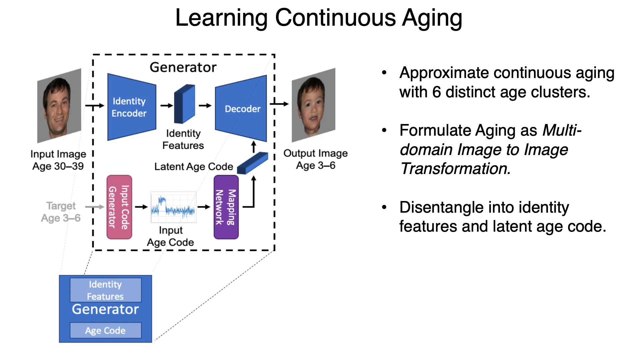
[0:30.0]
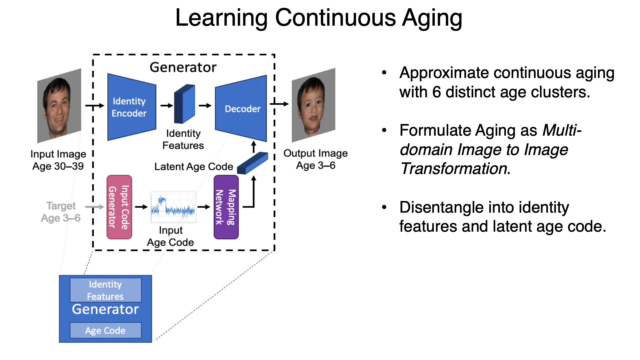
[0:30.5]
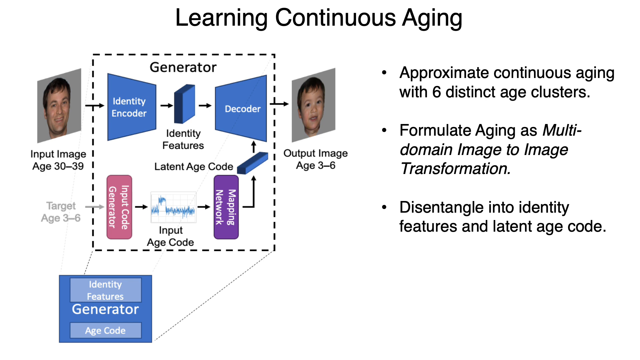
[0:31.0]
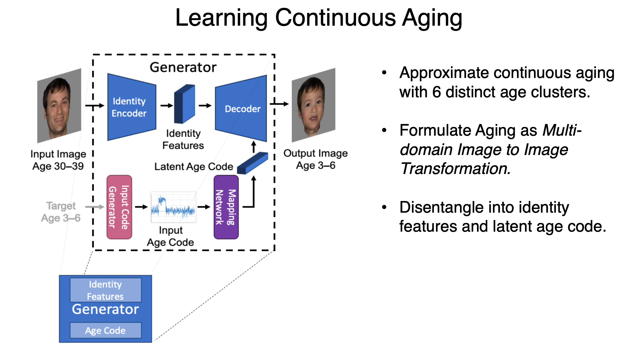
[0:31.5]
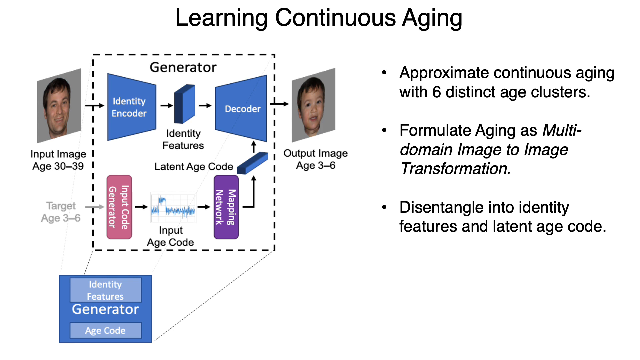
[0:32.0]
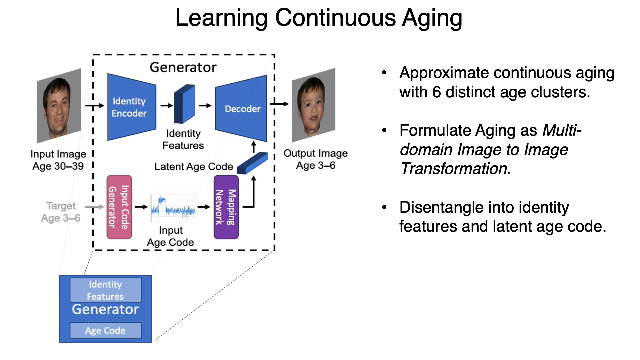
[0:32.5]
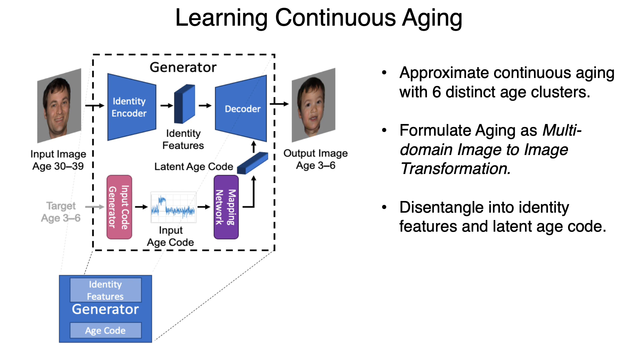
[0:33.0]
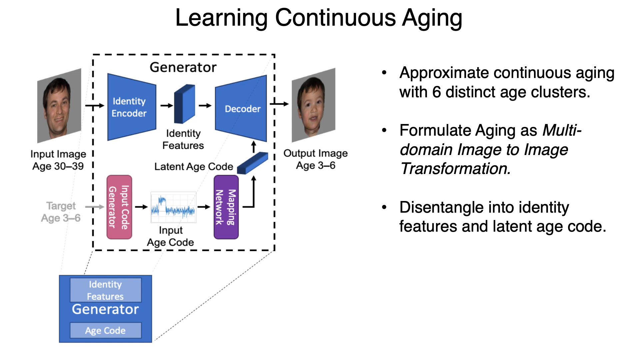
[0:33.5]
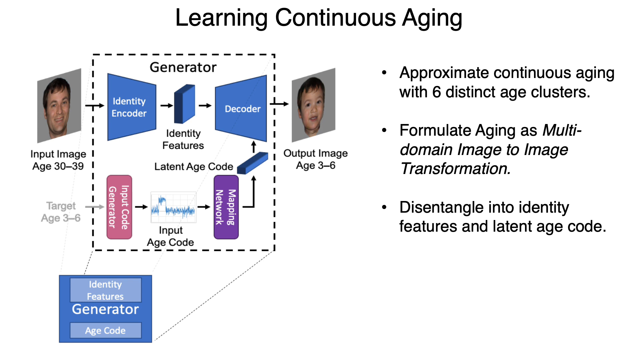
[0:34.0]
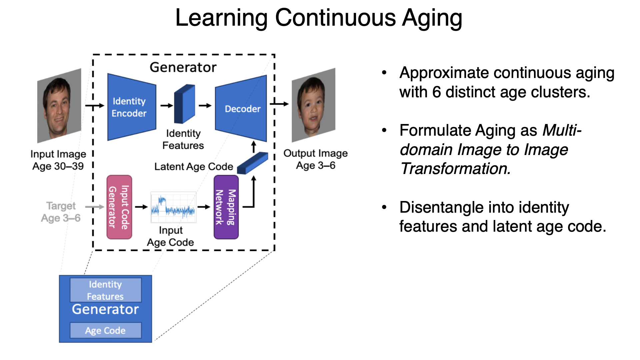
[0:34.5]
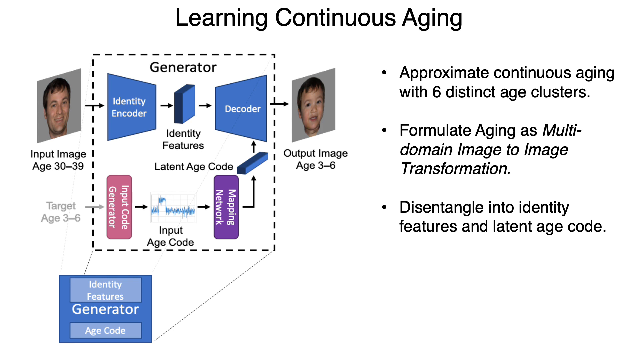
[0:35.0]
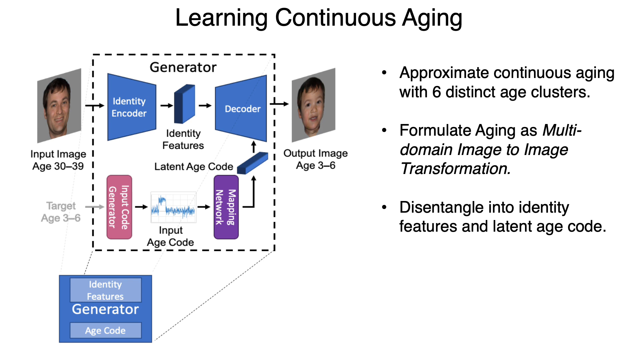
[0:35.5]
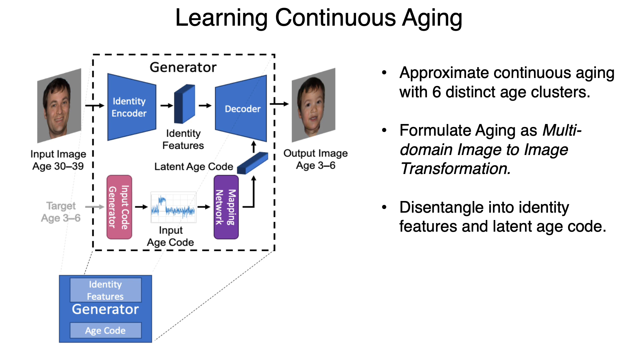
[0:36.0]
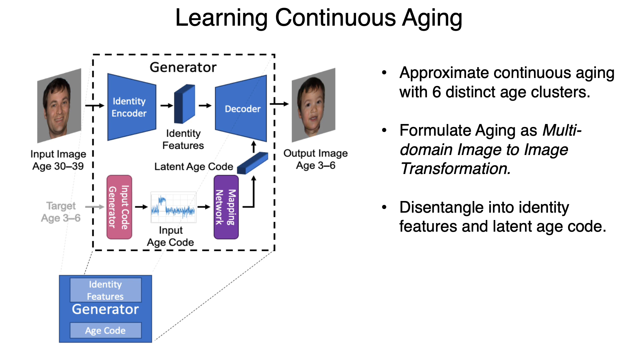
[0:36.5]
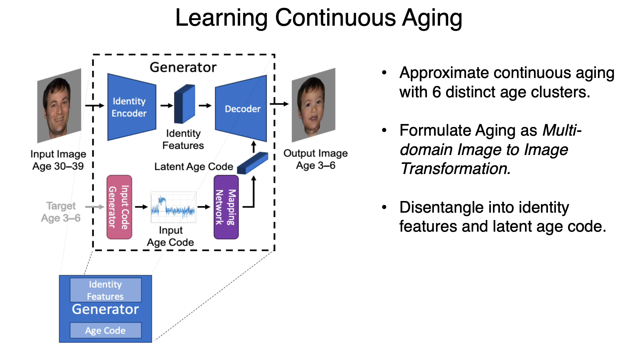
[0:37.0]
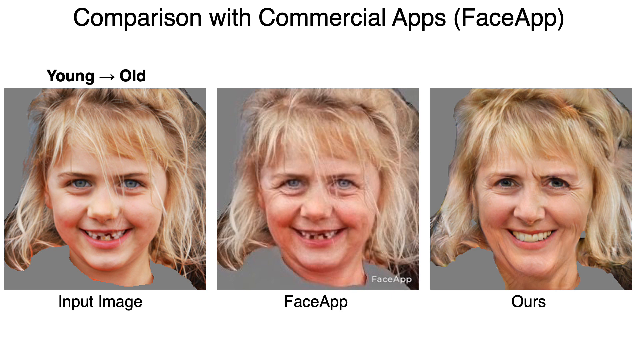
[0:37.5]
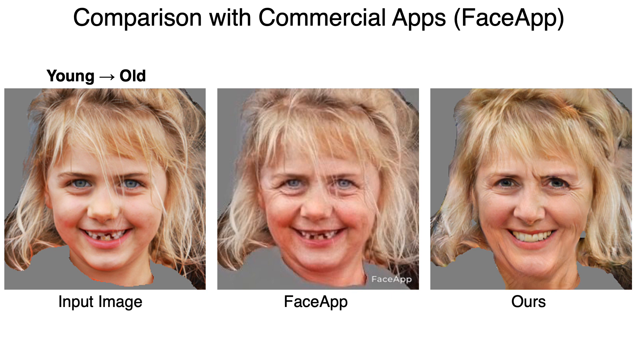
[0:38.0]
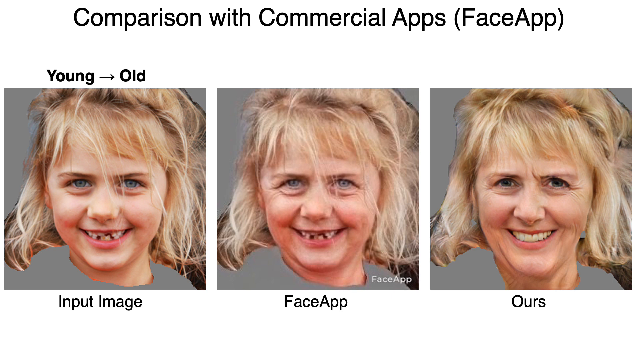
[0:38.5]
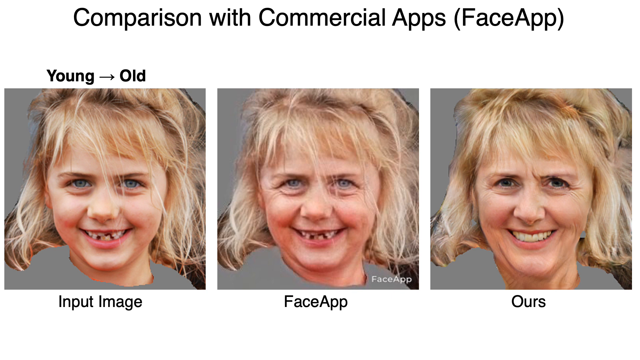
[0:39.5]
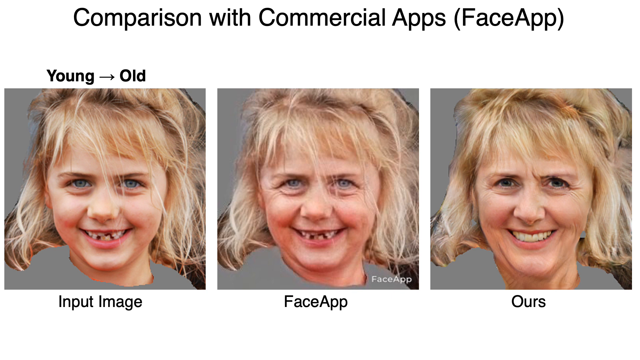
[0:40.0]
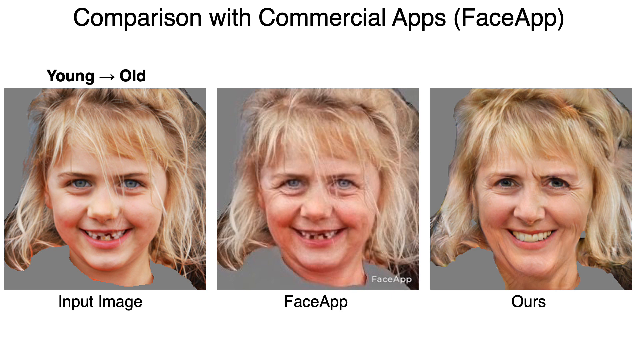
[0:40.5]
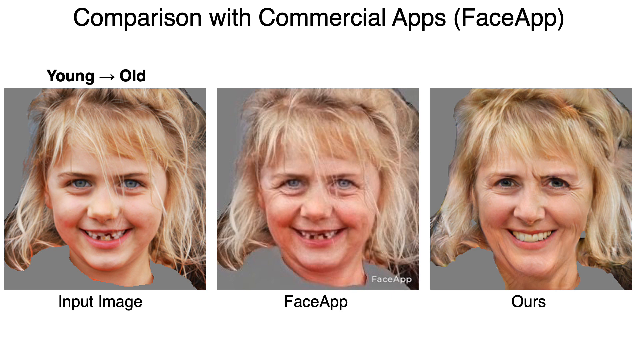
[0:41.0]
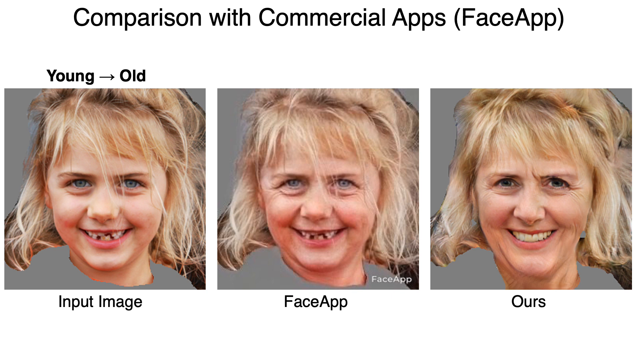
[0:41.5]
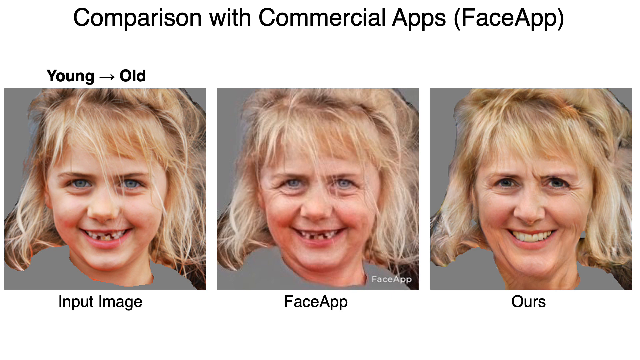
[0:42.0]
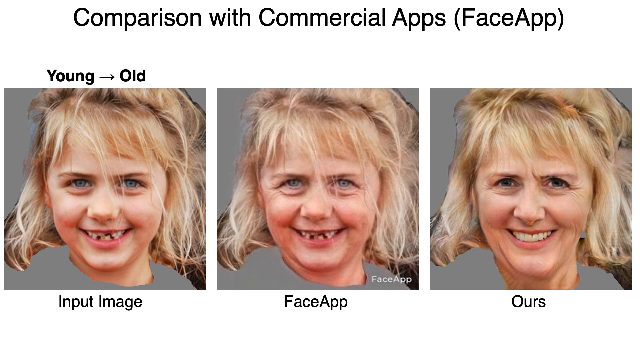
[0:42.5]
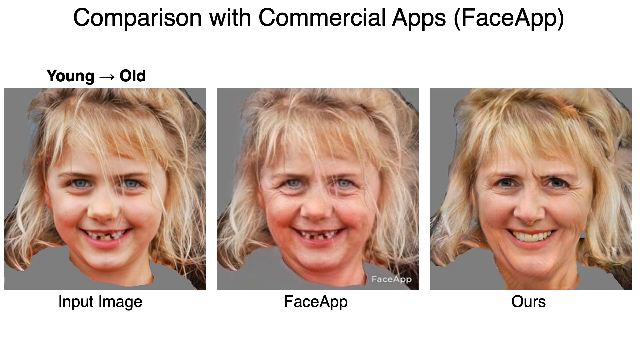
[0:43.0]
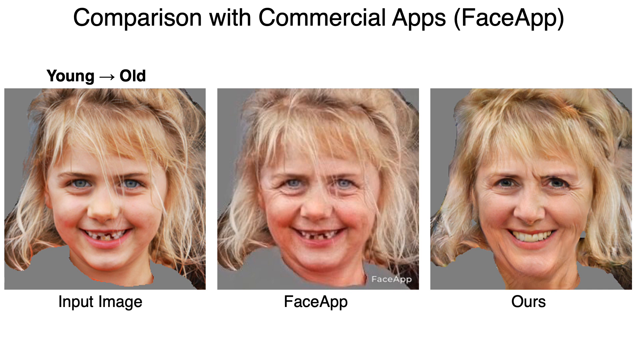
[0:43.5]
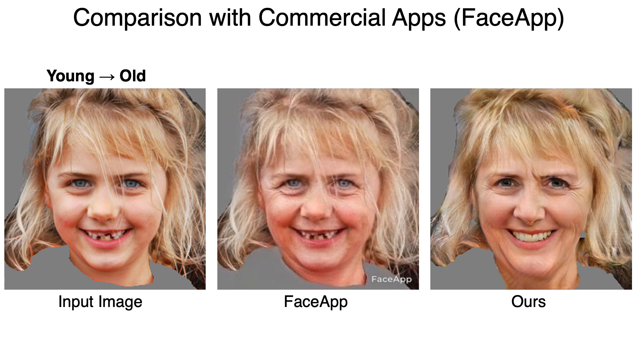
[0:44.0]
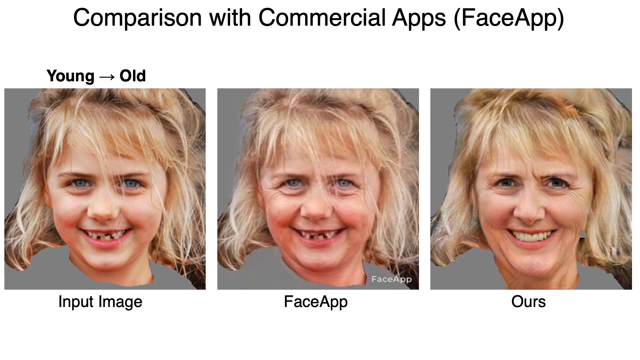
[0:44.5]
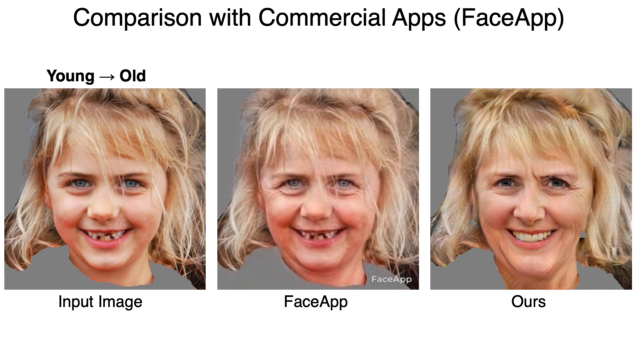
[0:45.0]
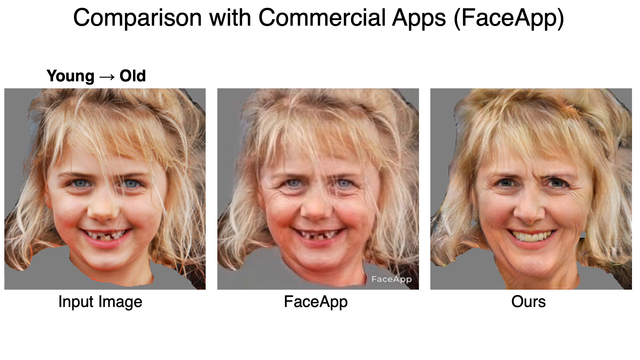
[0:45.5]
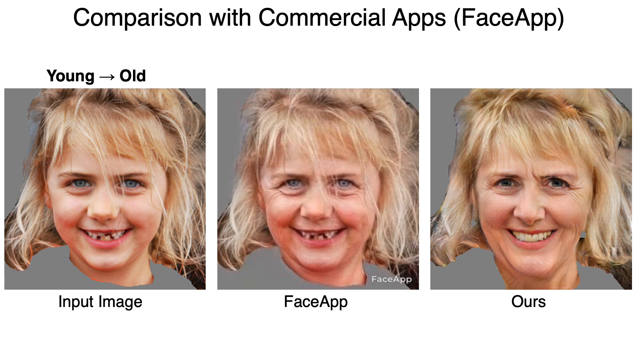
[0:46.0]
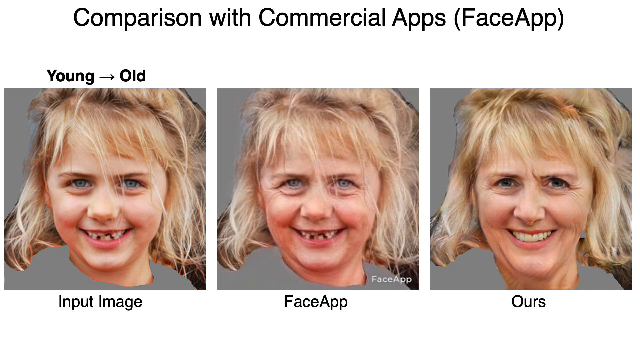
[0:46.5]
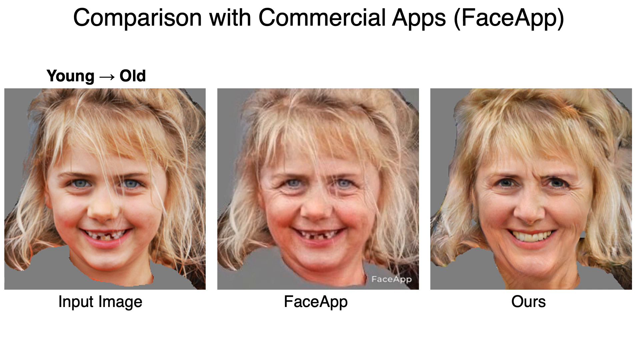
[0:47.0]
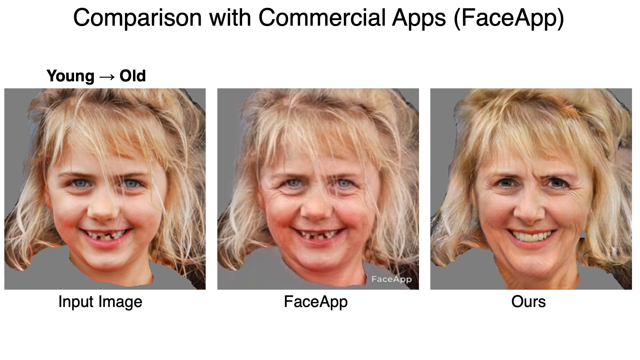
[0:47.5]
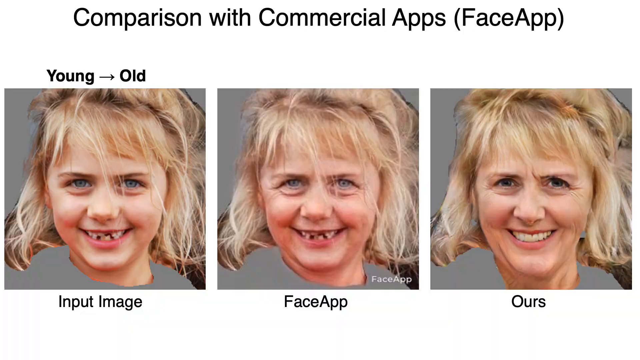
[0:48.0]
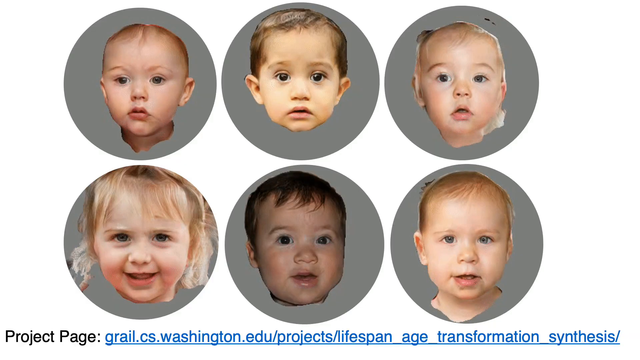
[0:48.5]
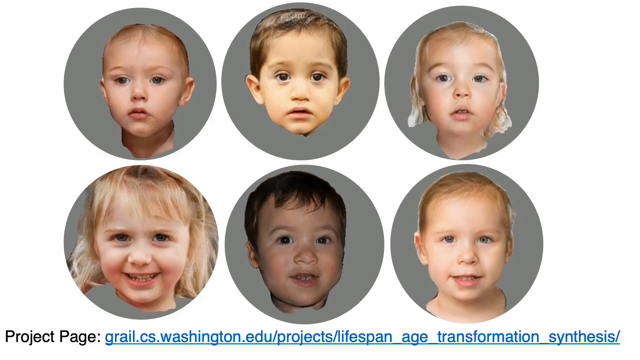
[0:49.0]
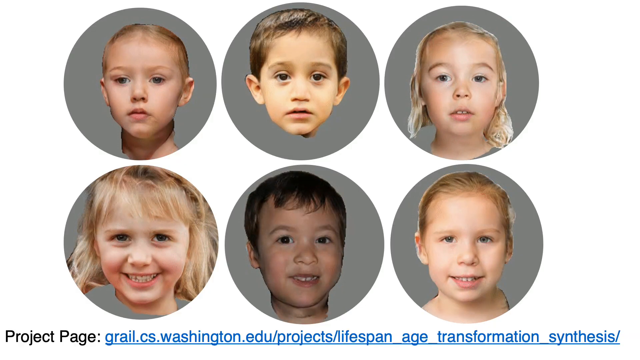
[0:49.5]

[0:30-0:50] A chart indicating the generator is shown along with three bullet points reading "approximate continuous aging with six distinct age clusters," "formulate aging as multi-domain image to image transformation," and "disentangle into identity features and latent age code." This stays on screen for a few moments, then changes to a new slide titled "Comparison with Commercial Apps," with "face app, young to old" in parentheses. There is an input image of a young girl, an image from face app, and an image labeled "hours," which is a more realistic aged image. The face app image still has the same missing teeth as the little girl and just kind of adds wrinkles and eye bags, whereas the other one shows an actual age progression. The video stays here for a few moments and then changes to progression images and animations: six gray circles, each with a child's face inside, three boys and three girls. The images begin to transform, aging the children.